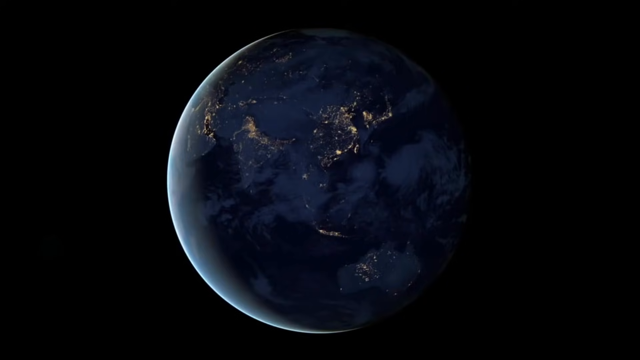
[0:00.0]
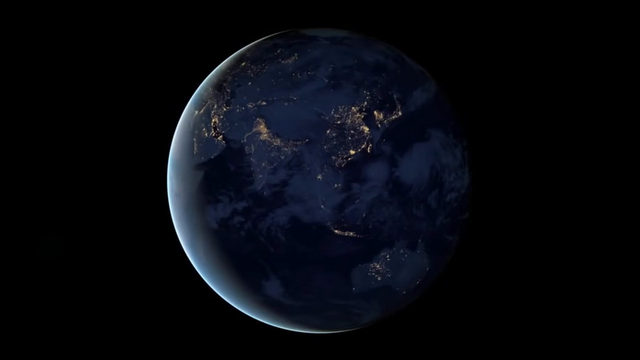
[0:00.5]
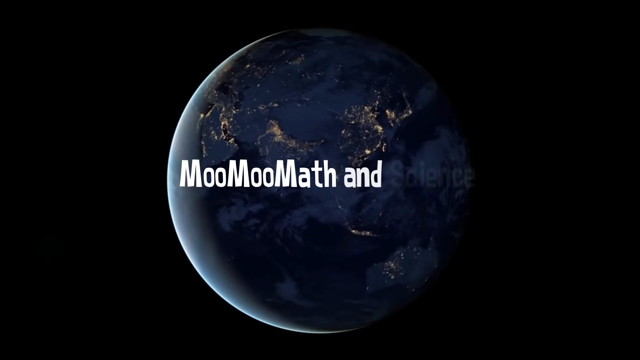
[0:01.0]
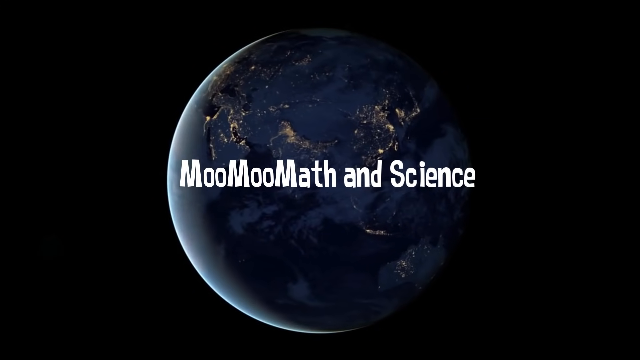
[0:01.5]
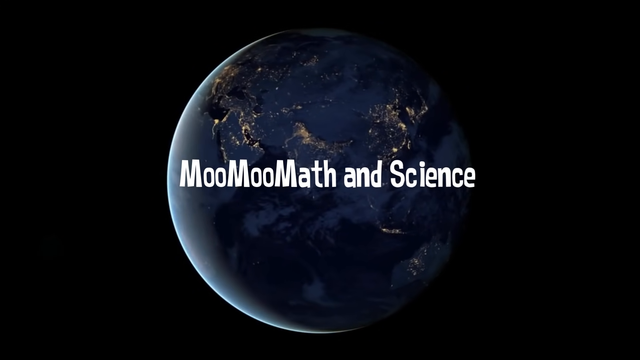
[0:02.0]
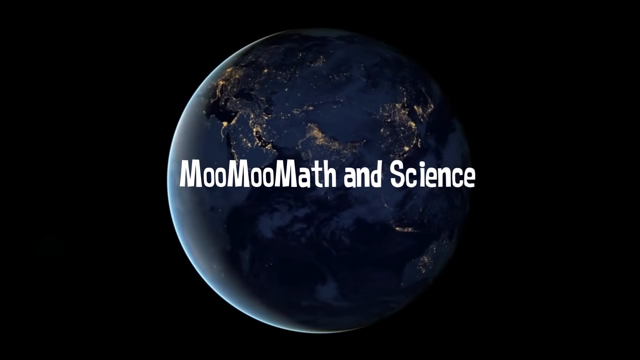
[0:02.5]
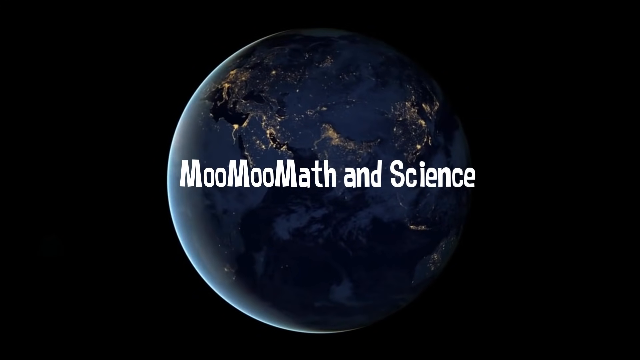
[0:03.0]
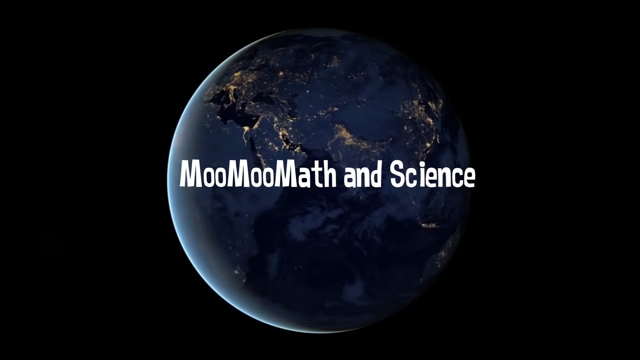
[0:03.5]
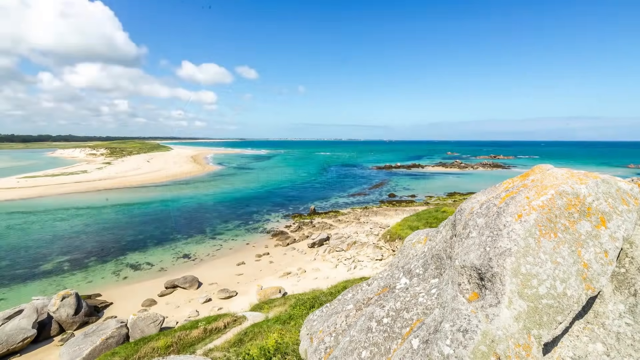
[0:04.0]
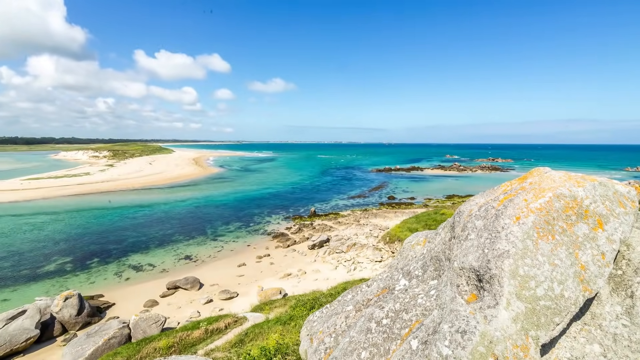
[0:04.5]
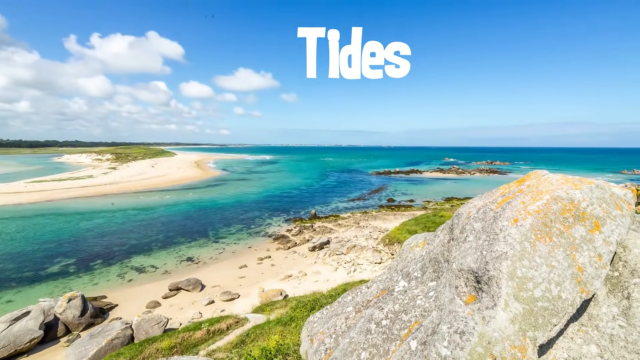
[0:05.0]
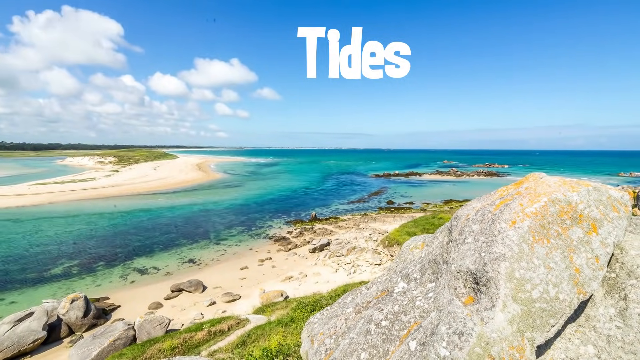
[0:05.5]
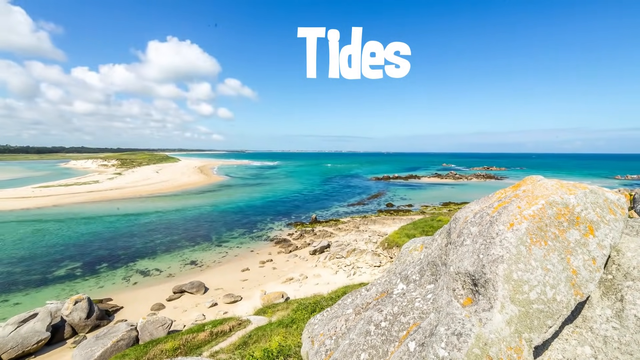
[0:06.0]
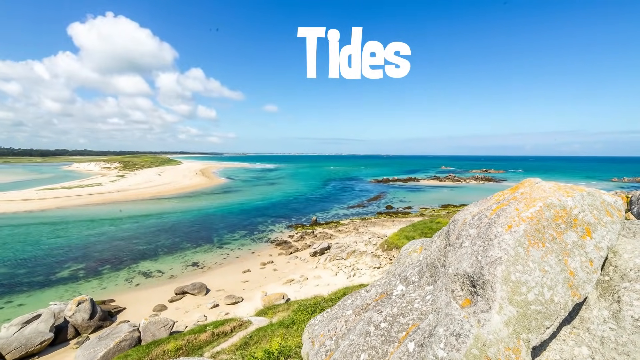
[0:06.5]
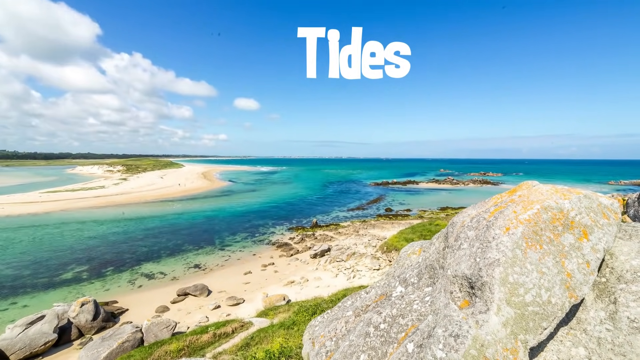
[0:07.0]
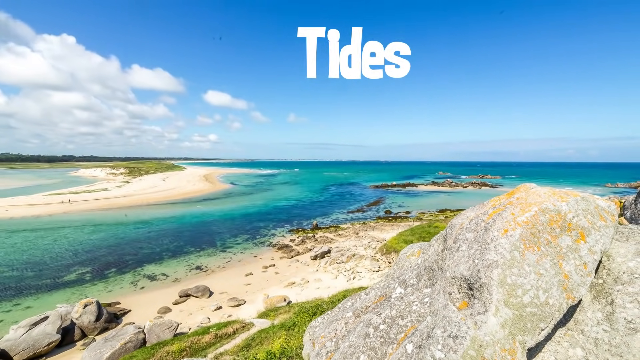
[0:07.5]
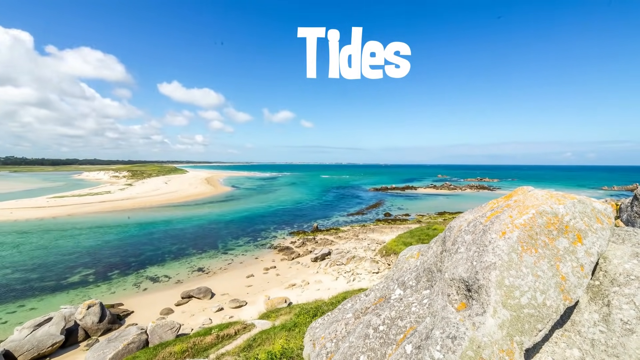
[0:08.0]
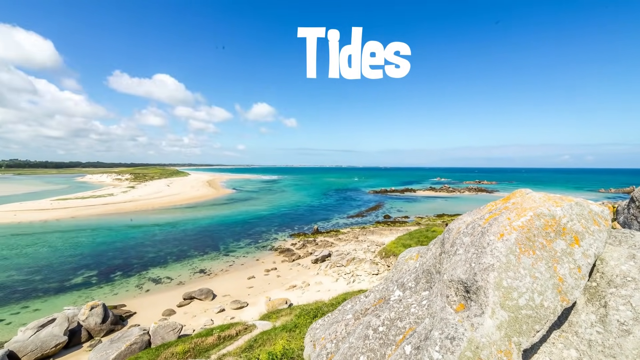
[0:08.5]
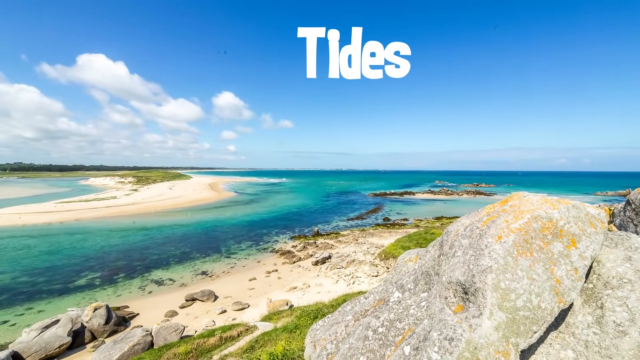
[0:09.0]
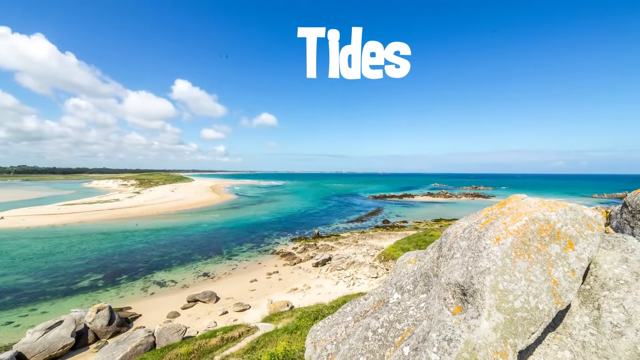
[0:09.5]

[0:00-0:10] The planet Earth is in the center, rotating to the right, with black all around it. The Earth looks very dim, with low lighting on it, and in the middle are the words "MooMooMath and Science". The scene changes to what looks like beach or island scenery, progressing very fast in a time lapse. Clouds in the top left area of the sky move very quickly to the left, and the ocean water also moves very fast. To the left is a small island, and below is also an island. A large stone or rock sticks out on the lower right side. At the top center is the title "tides".